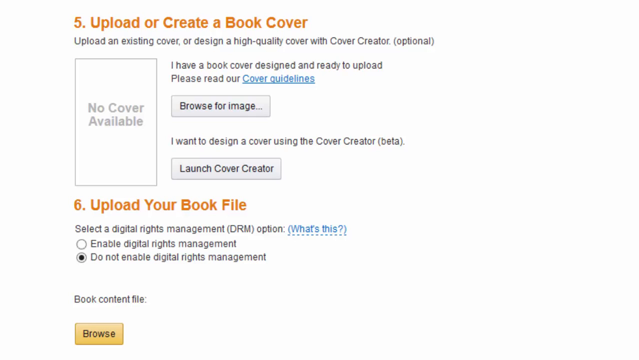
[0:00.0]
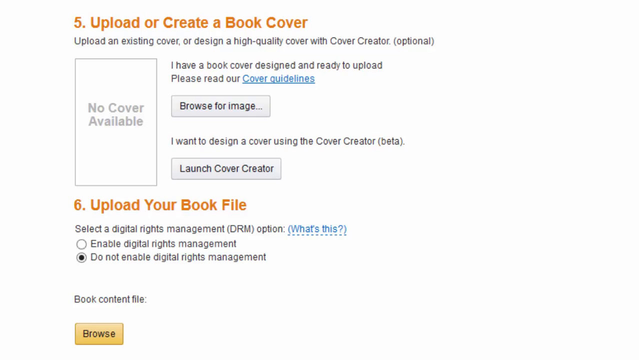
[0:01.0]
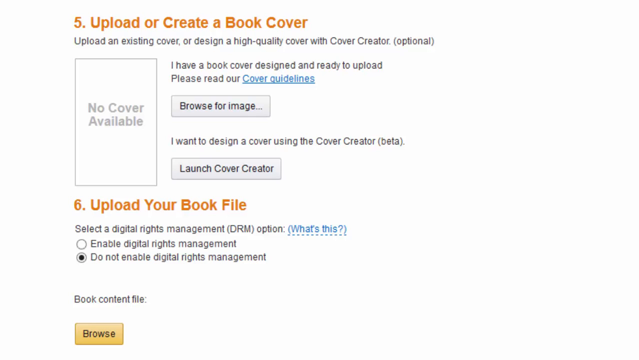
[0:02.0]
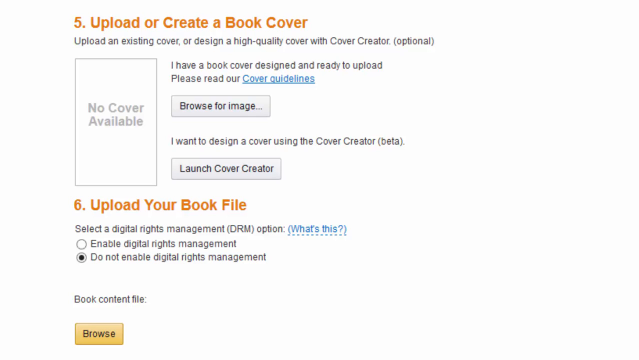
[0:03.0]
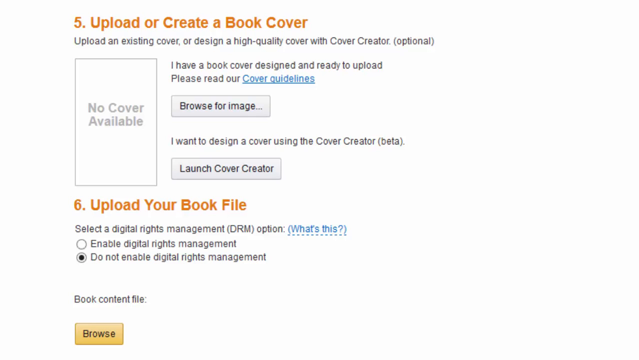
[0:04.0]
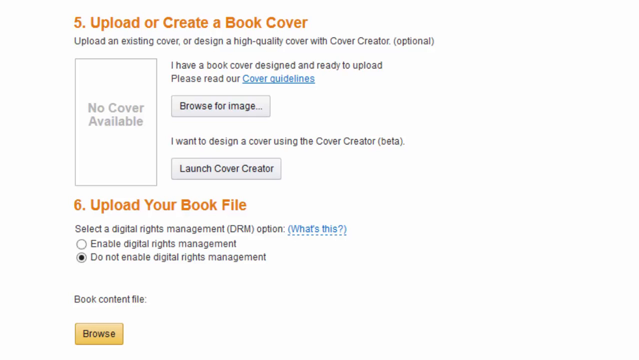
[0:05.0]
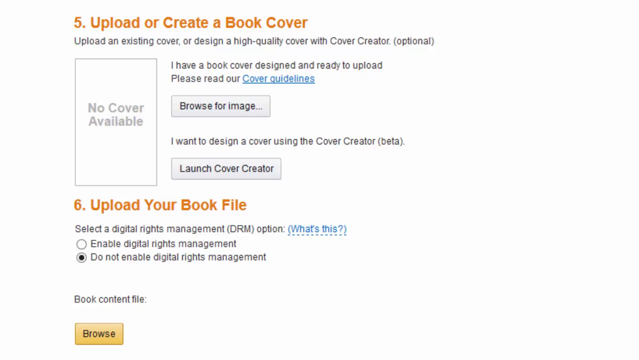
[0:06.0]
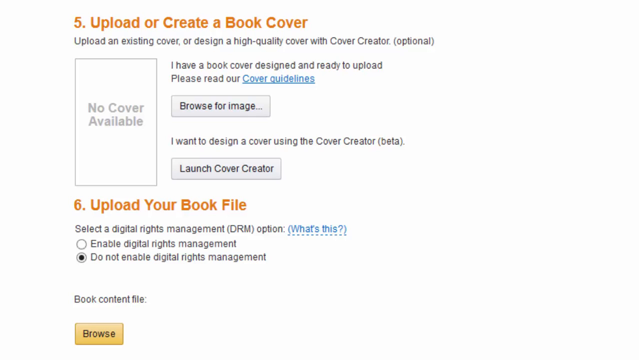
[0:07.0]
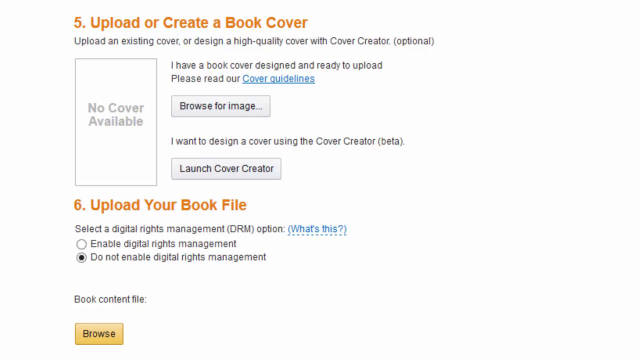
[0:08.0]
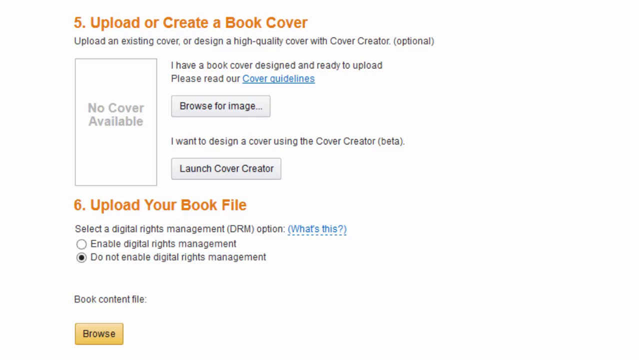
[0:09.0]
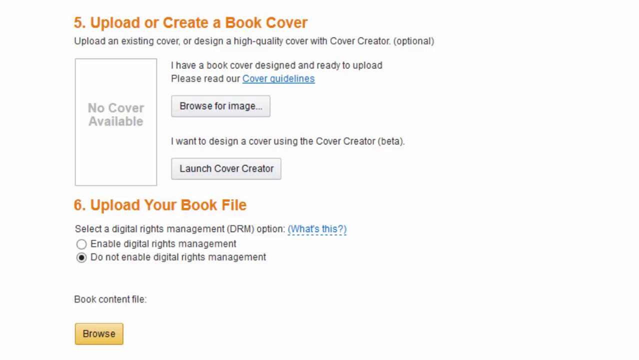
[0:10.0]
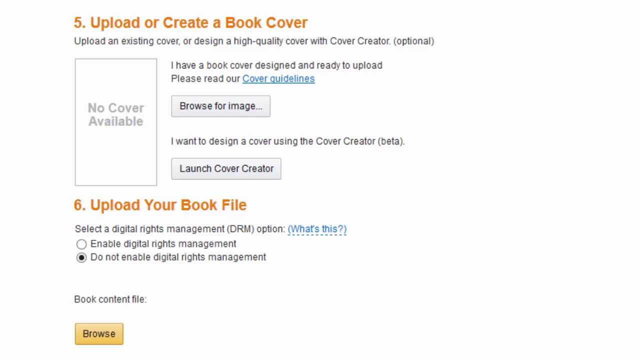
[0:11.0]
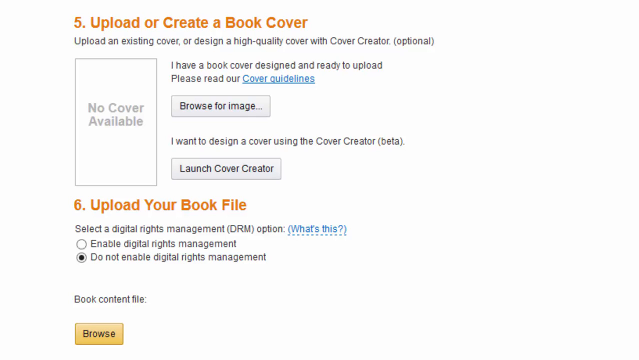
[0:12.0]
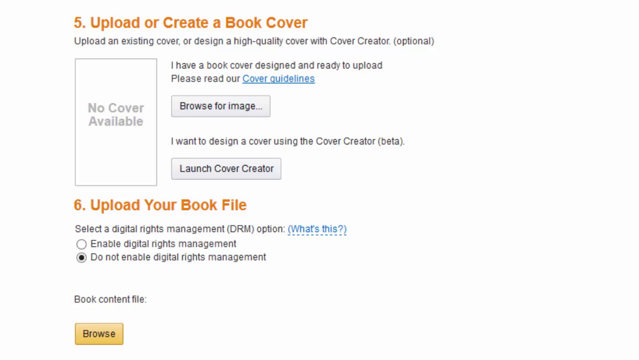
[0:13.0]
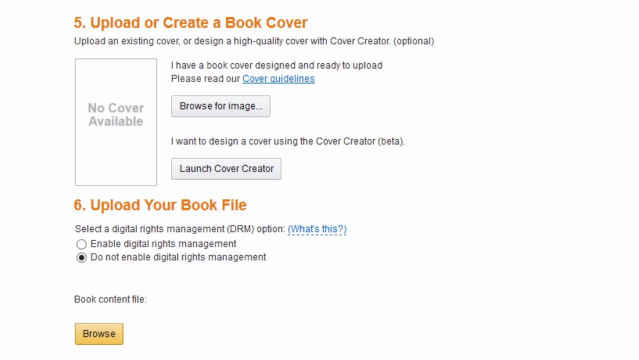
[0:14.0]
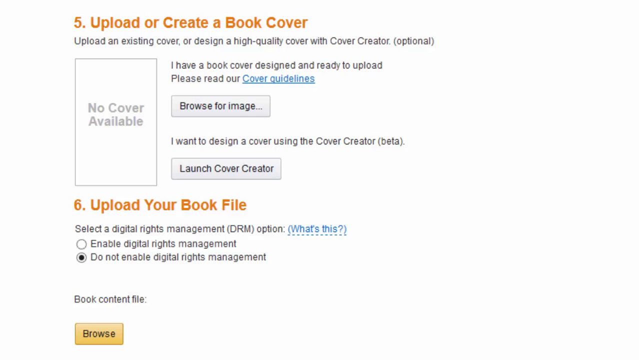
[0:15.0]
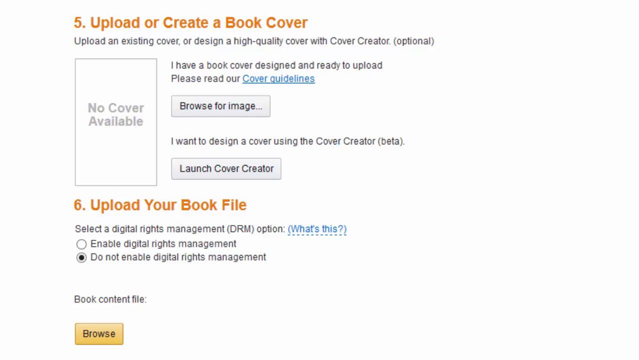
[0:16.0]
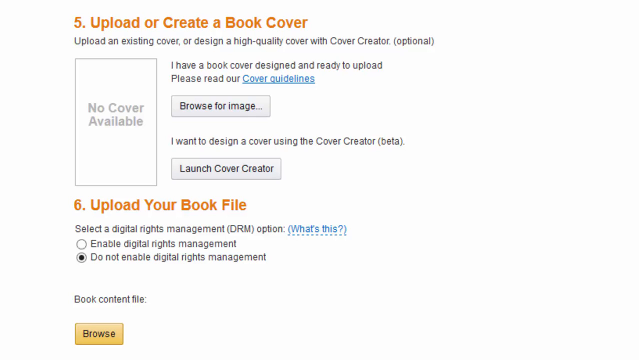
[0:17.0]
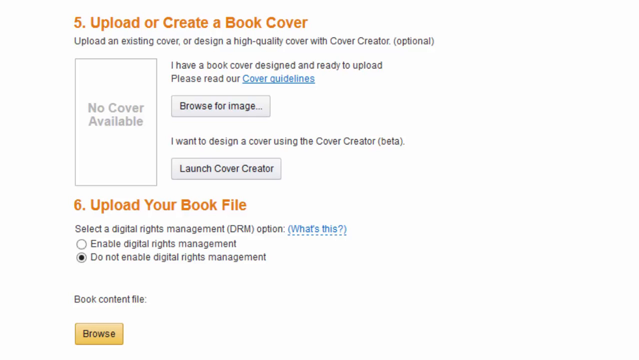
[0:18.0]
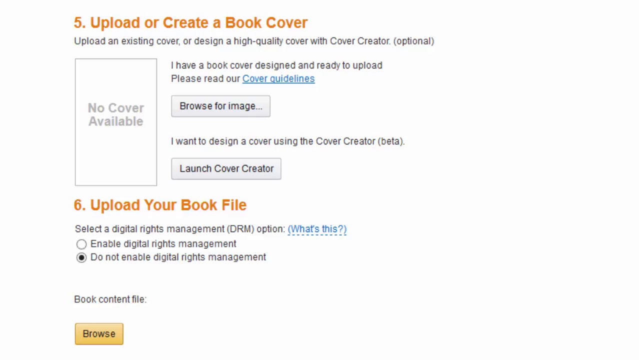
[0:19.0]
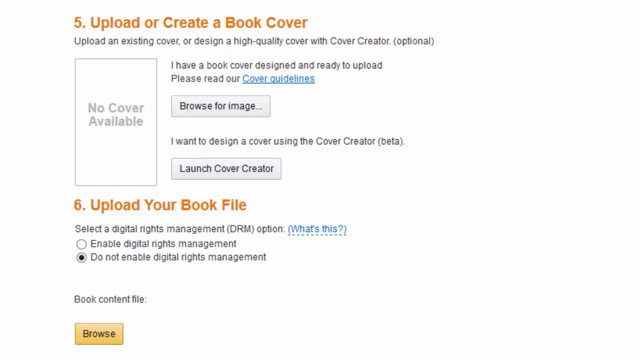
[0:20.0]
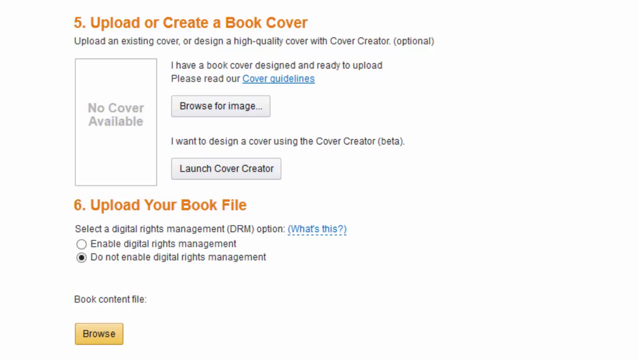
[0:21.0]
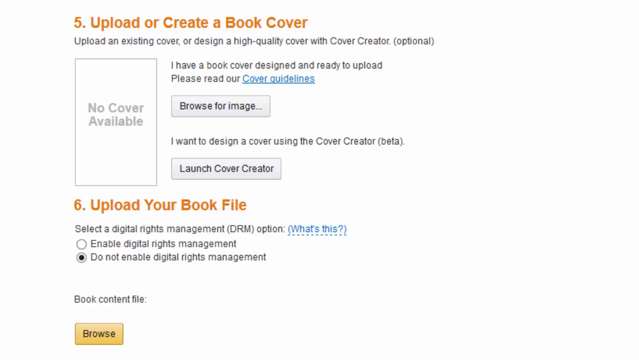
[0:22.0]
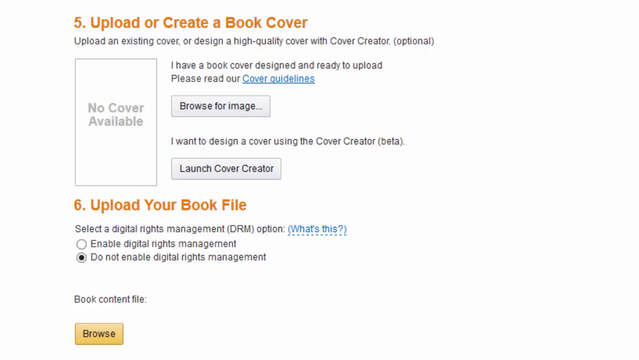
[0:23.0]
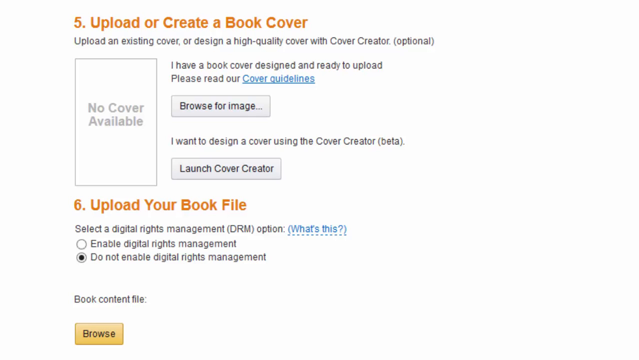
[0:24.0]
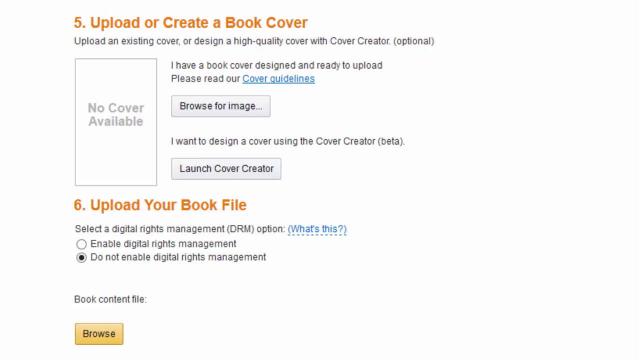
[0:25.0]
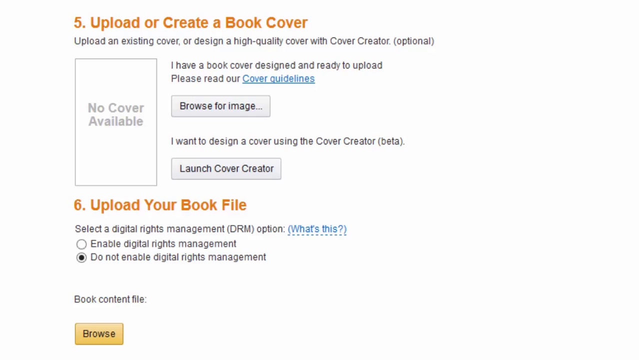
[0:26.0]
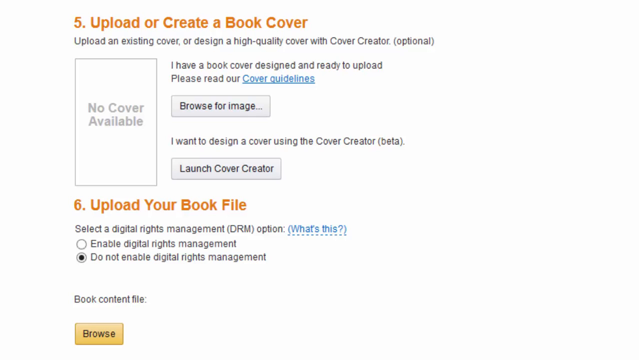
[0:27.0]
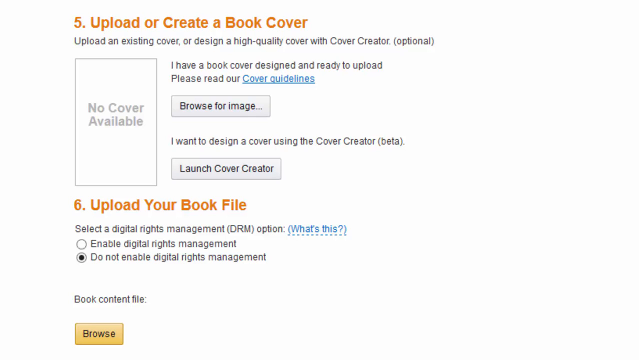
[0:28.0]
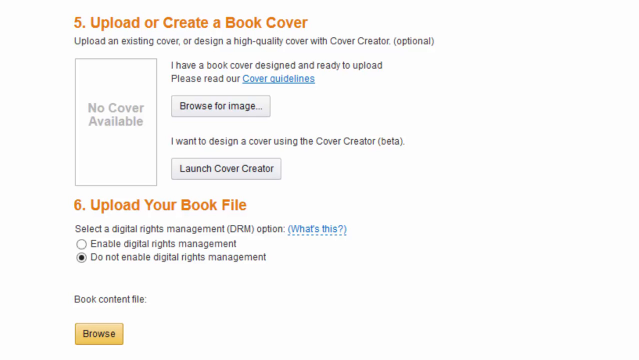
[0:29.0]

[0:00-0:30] A page of text is shown that appears to be instructions, possibly for creating a book or a book cover online, and it is on step five. At the top is an orange "5" with the title "upload or create a book cover". Below that, in a smaller black font, it reads "upload an existing cover or design a high quality cover with cover creator optional". Below that on the left is a rectangle with gray text inside reading "no cover available", which looks like a placeholder, maybe for an image to be uploaded. To the right of it, below the number five and the title, the text reads "I have a book cover designed and ready to upload. Please read our cover guidelines", with "cover guidelines" in blue and underlined, indicating a link. Below that is a web page button that says "browse for image". Below that the text reads "I want to design a cover using the cover creator in beta", followed by a button titled "launch cover creator". The next section, number six, is also in orange and reads "upload your book file". Below it, in a smaller black font, it says "selected digital rights management DRM option", followed by a link reading "what's this" that apparently leads to a description of DRM. Below that are two radio buttons, "enable digital rights management" and "do not enable digital rights management"; the second is selected. A couple of lines down it reads "book content file:", followed by an orange "browse" button at the very bottom.